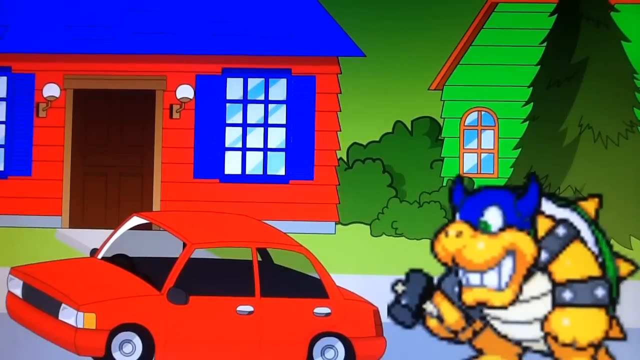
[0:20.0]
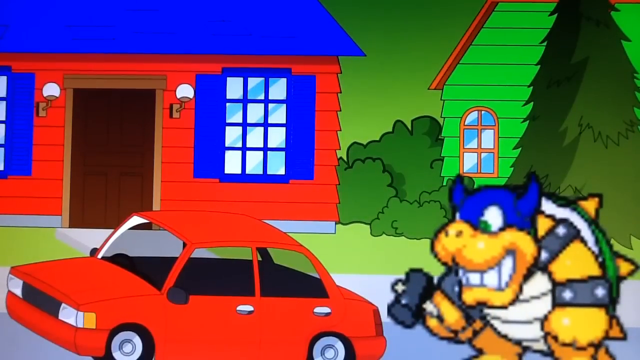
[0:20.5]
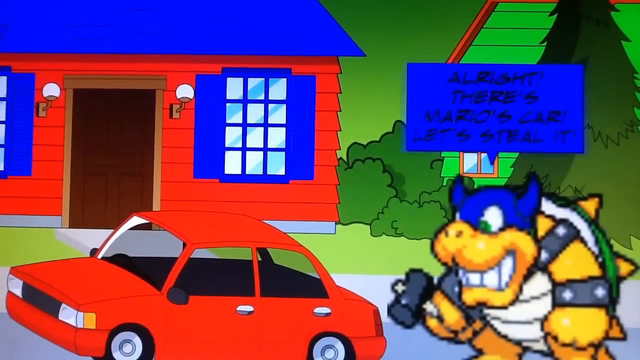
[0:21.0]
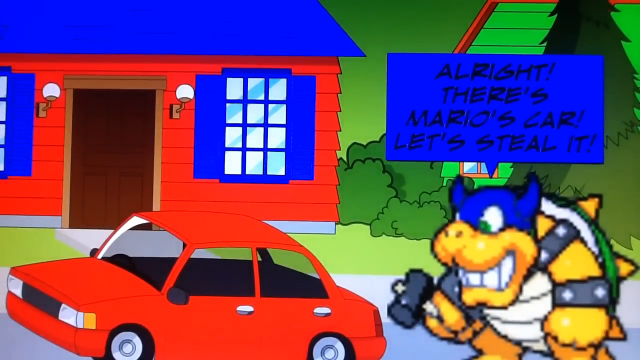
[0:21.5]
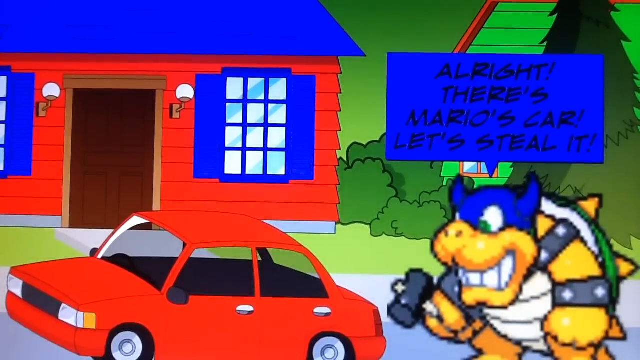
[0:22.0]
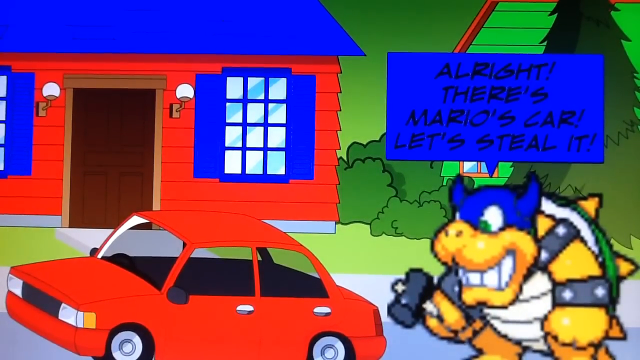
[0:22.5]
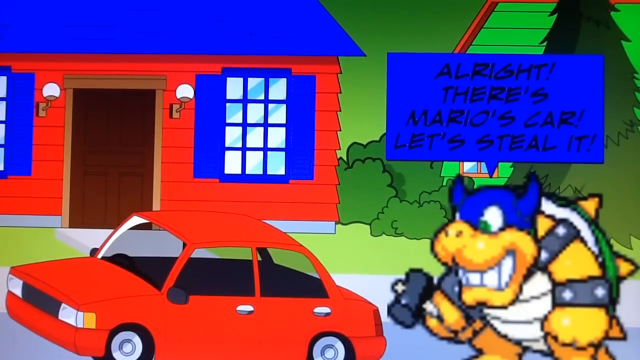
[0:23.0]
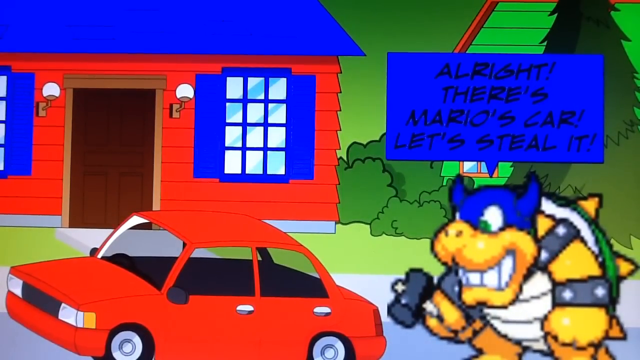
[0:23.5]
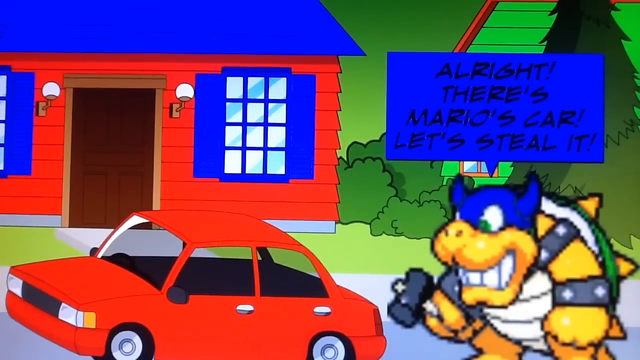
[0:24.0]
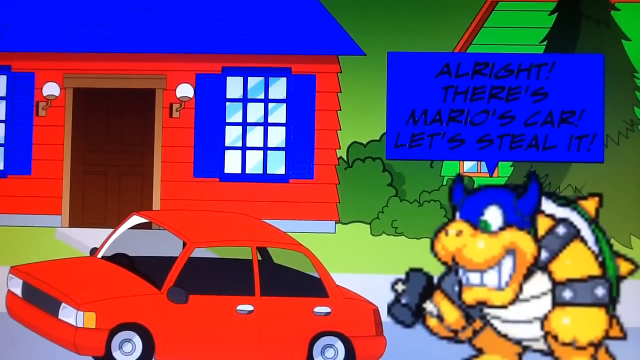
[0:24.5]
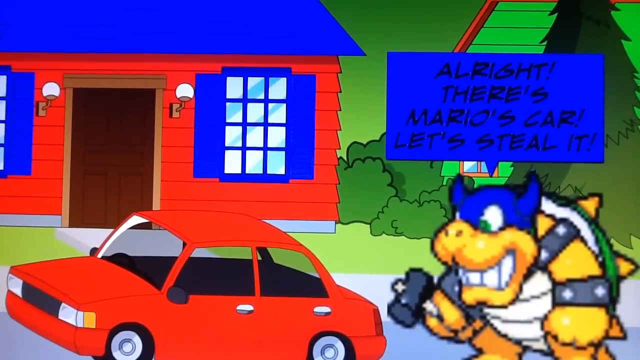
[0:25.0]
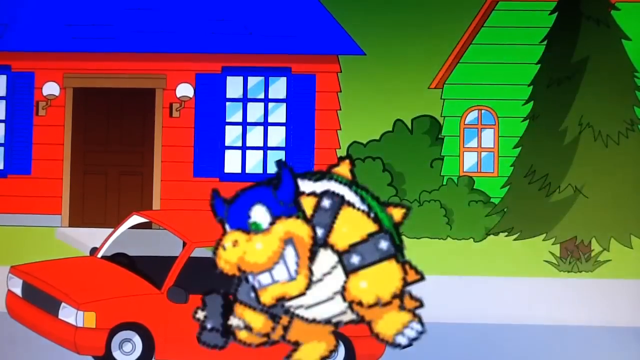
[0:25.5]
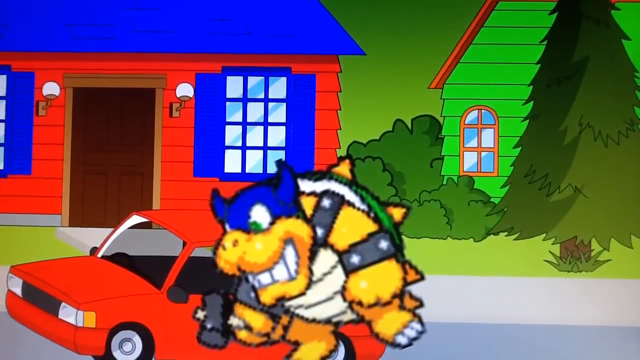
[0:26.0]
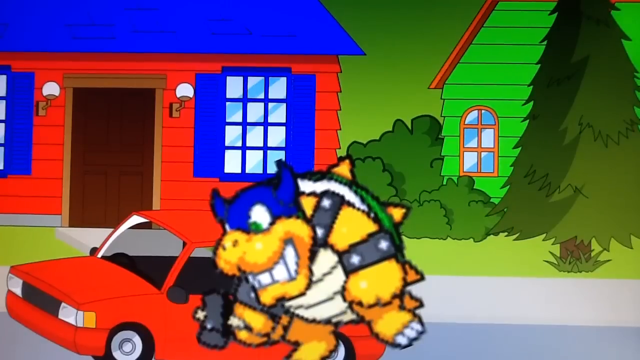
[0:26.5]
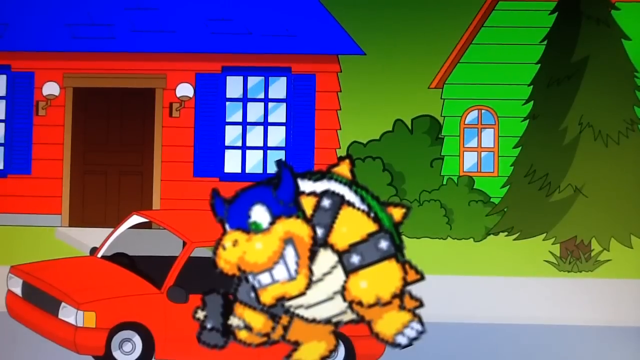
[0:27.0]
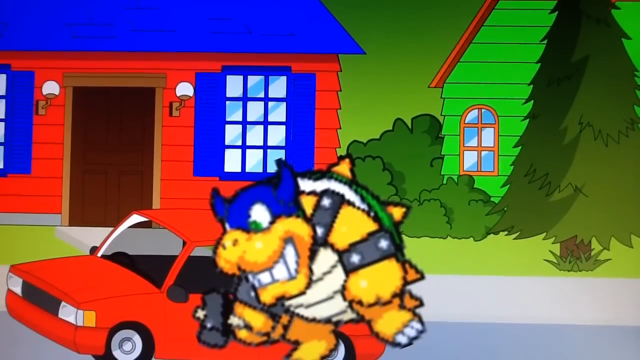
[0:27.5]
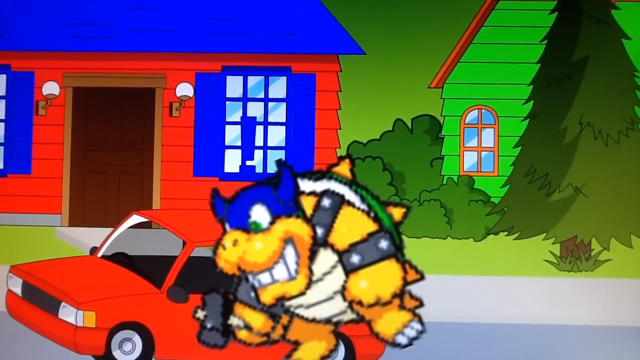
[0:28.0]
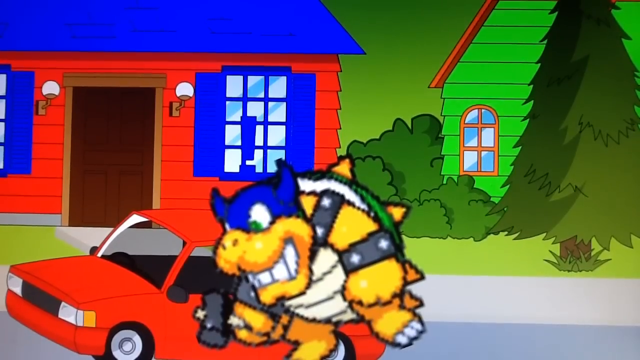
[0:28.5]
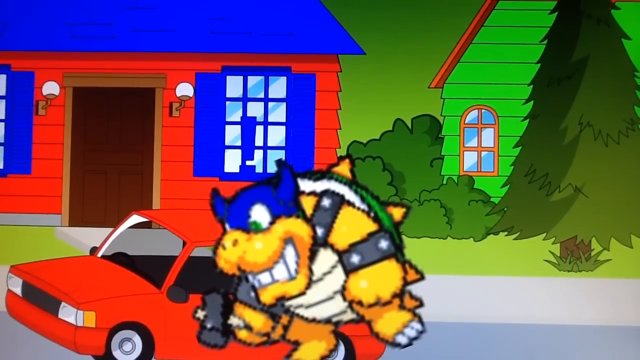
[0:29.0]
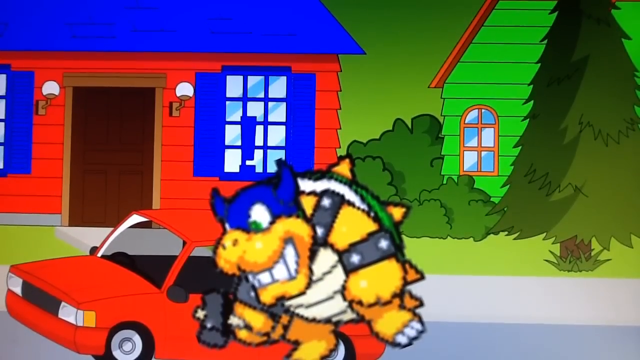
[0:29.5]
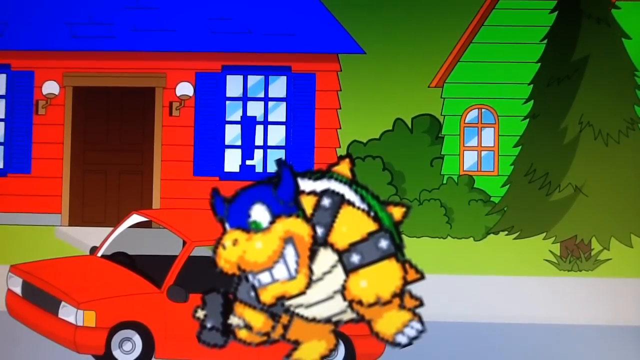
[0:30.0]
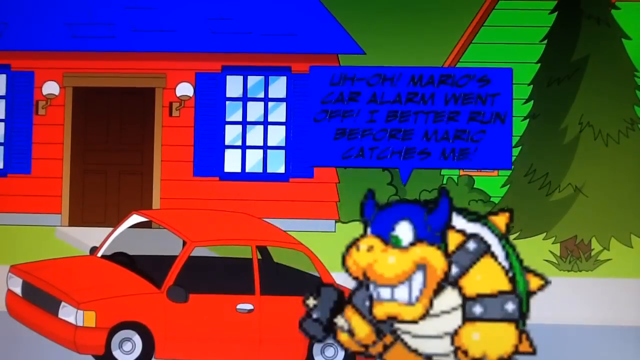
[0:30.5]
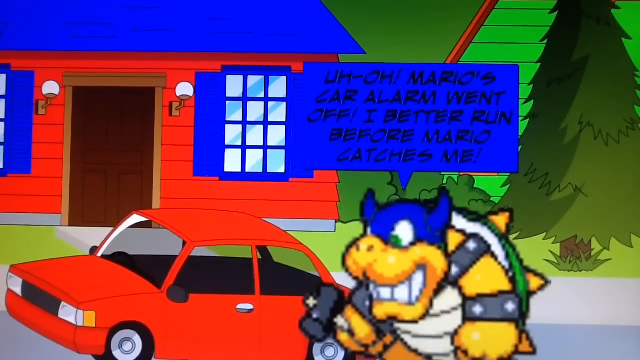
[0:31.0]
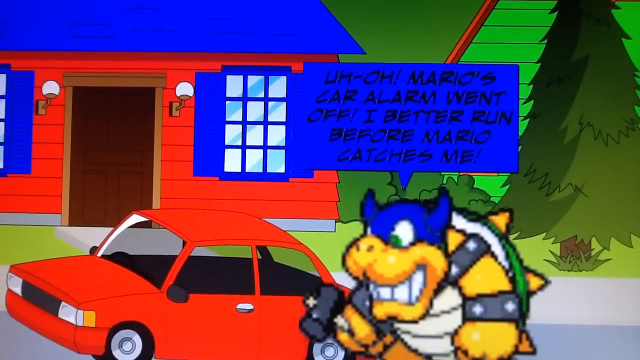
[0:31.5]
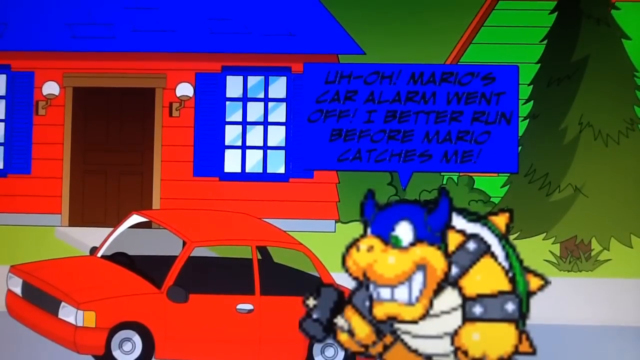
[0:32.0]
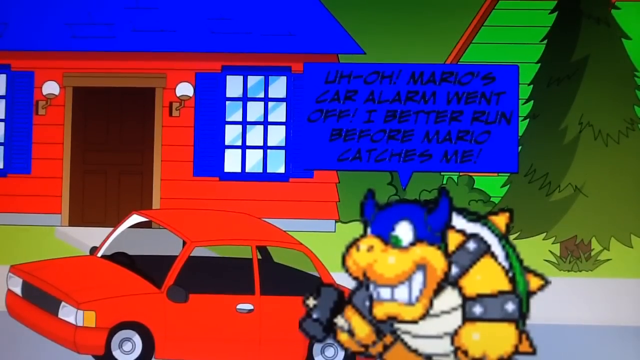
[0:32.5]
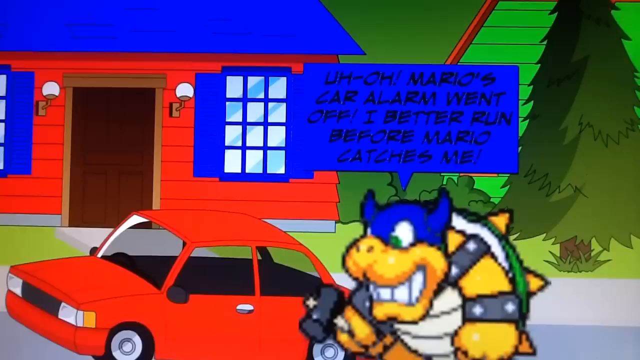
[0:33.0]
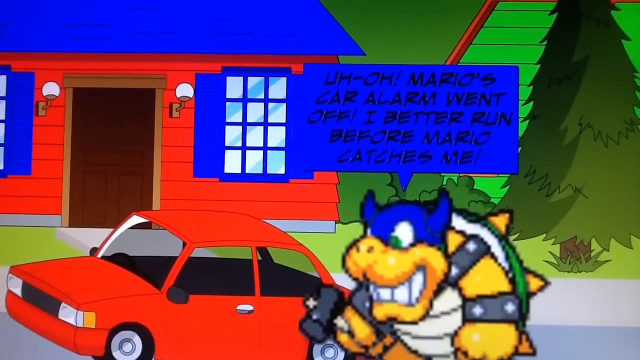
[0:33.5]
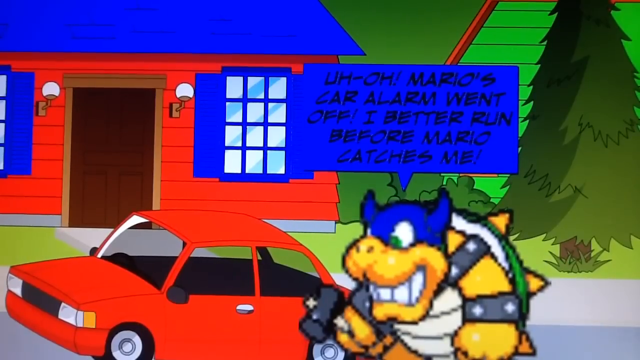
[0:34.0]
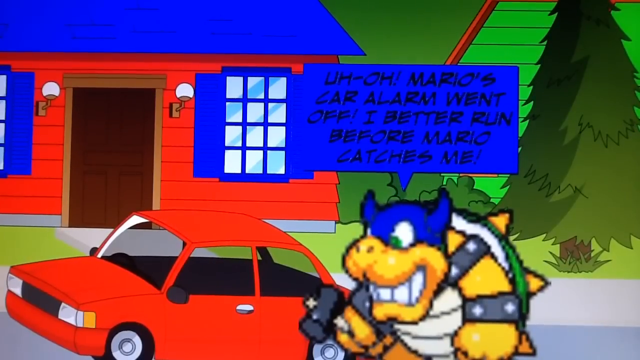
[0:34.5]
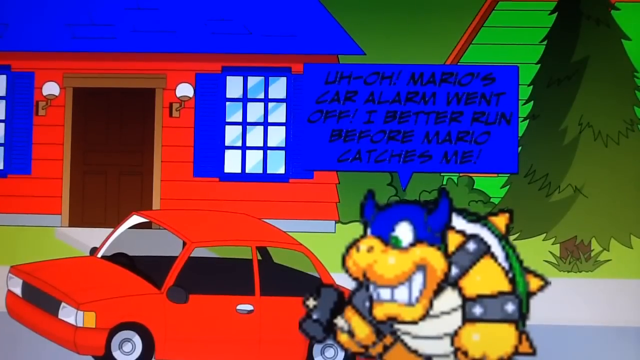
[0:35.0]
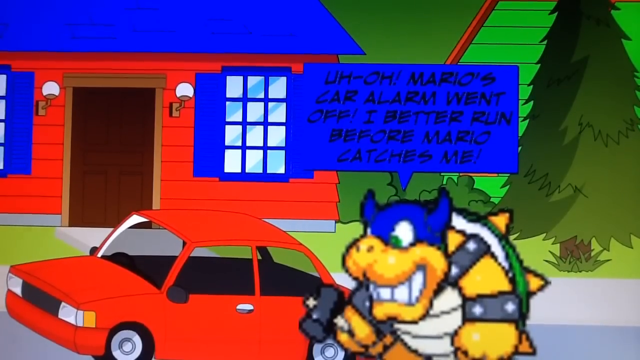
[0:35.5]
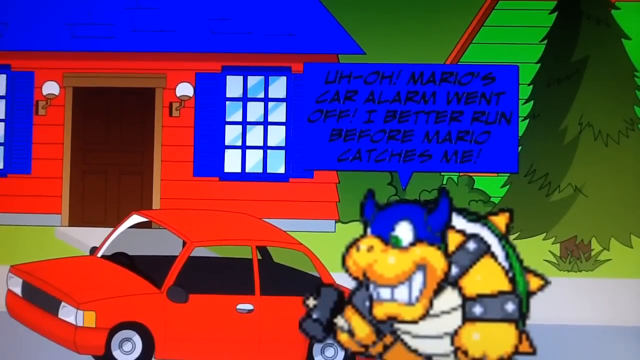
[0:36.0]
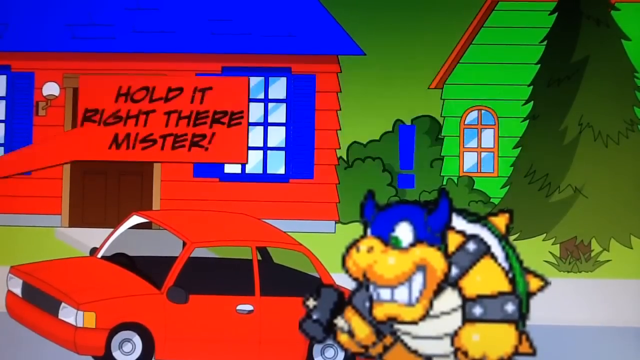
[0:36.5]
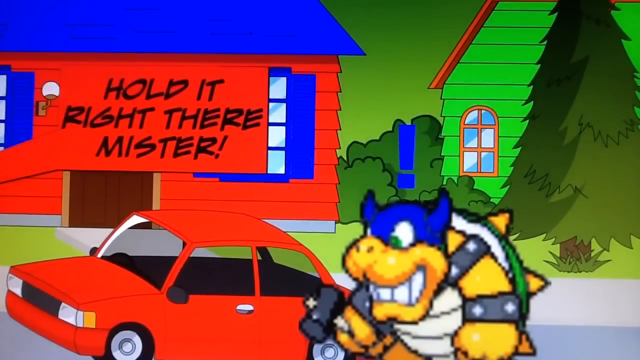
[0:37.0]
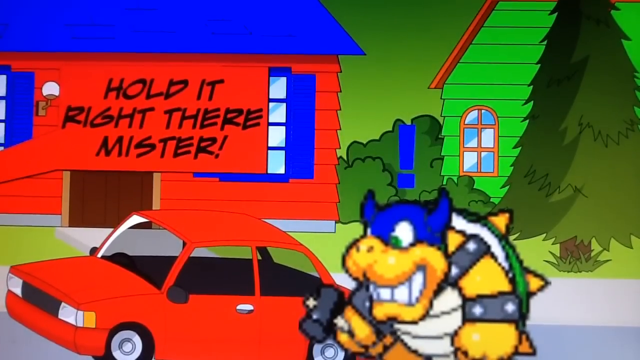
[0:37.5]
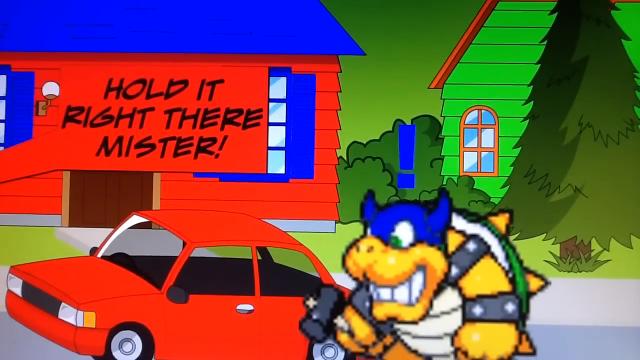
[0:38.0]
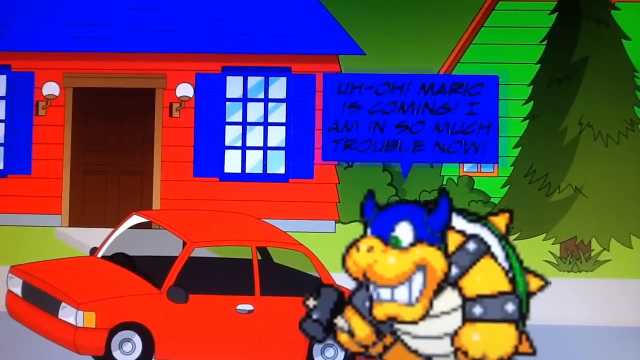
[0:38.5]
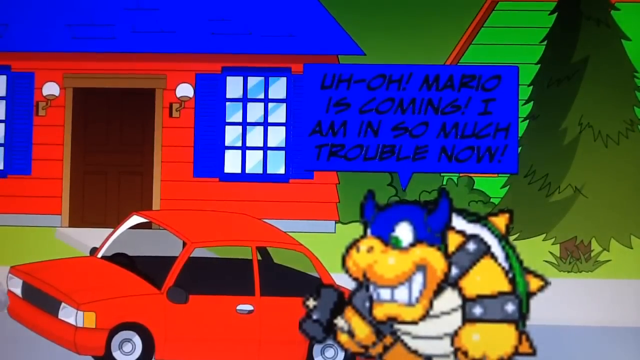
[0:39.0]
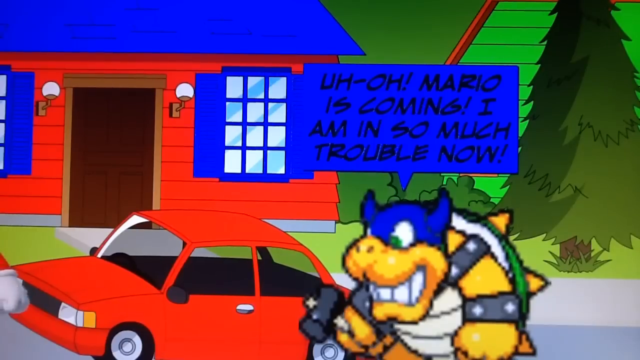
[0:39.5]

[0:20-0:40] The character comes up to Mario's car outside in a neighborhood with houses. There is a one-story red house with blue shutters and 12 panes, with two outdoor lights on either side. To the right is a green house with one arched window in the corner. There are bushes and trees outside, and the sky looks green. The character looks sort of like a turtle with armor; he is yellow, with a blue mask on the top of his face and horns underneath the mask. He seems to have green eyes and really big white teeth. On his back is what almost looks like a turtle shell with spikes, attached to him with leather-like straps that have little spikes as well. He holds his hammer in his right hand as he approaches Mario's car, a red sedan parked outside, and tries to break into it by kind of hitting or smashing it with the hammer. He says, "All right, here's Mario's car. Let's steal it." An exclamation point appears over his head, and he says, "Oh, Mario's car alarm went off. I better run before Mario catches me." To the left, text says "Hold it right there, mister." He says, "Oh, Mario's coming. I better run," as Mario starts coming into the scene.